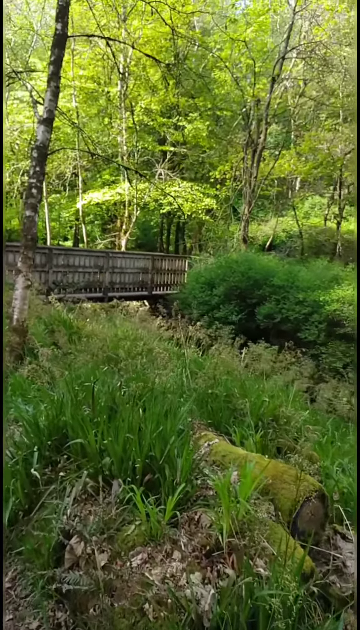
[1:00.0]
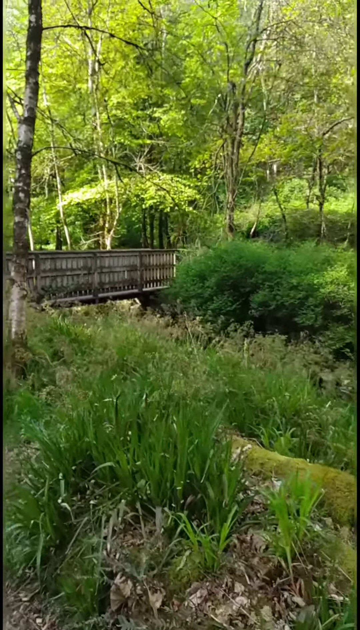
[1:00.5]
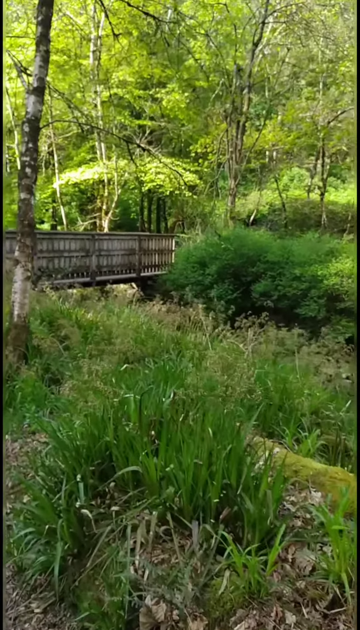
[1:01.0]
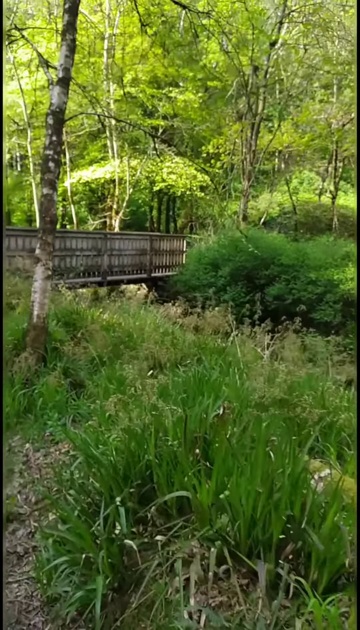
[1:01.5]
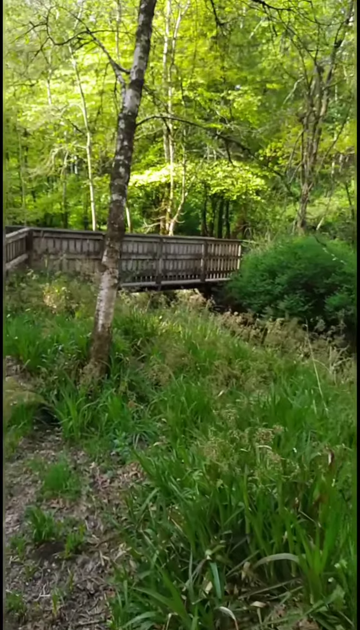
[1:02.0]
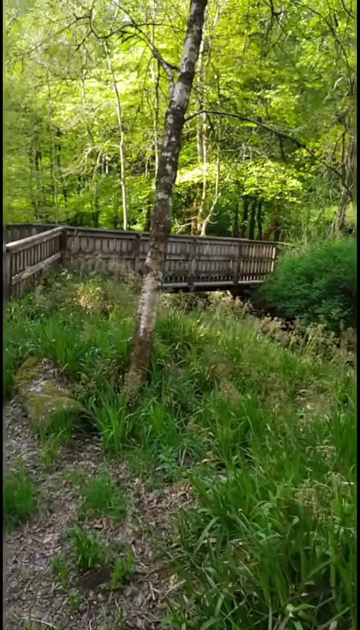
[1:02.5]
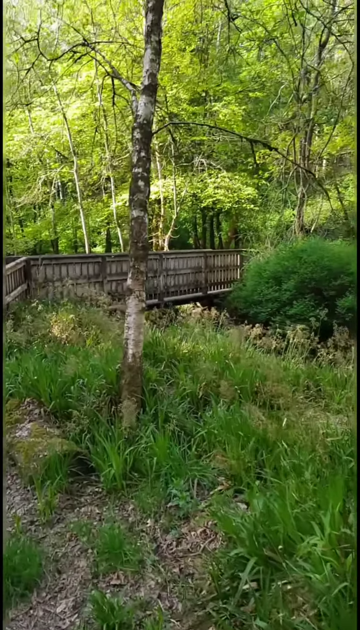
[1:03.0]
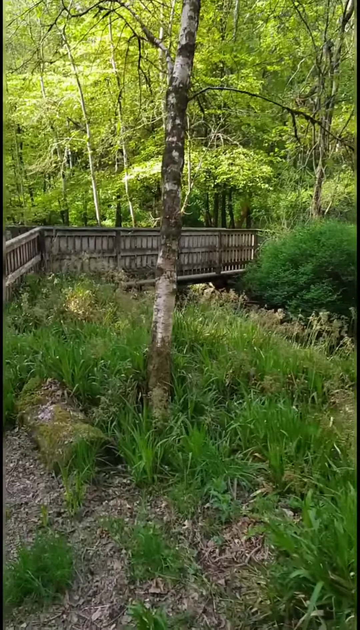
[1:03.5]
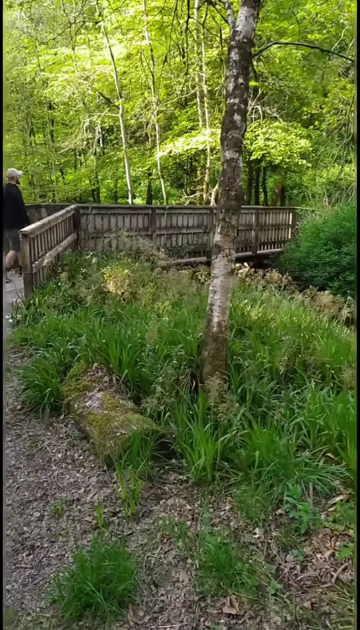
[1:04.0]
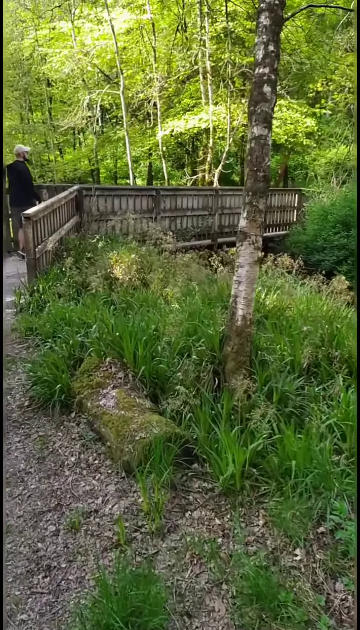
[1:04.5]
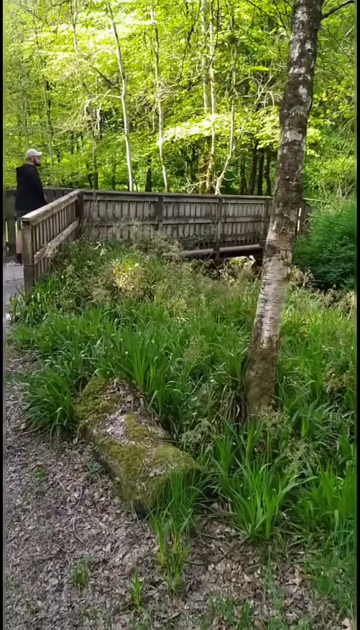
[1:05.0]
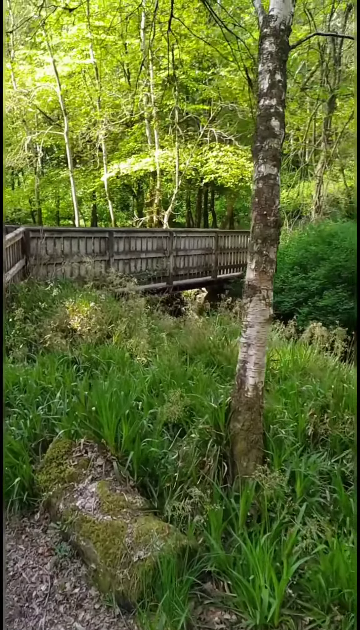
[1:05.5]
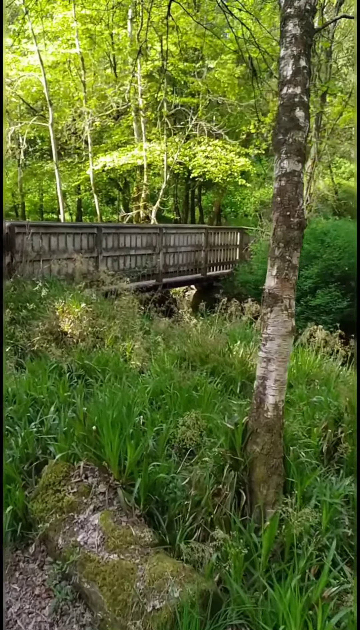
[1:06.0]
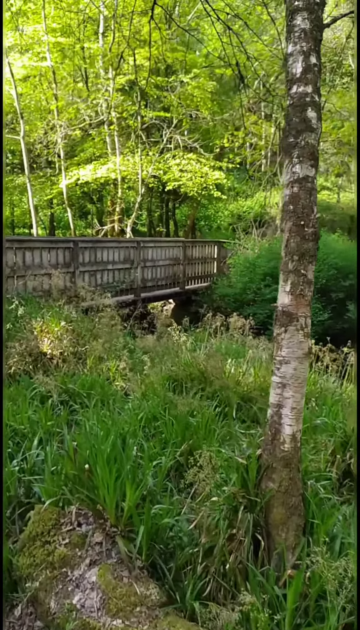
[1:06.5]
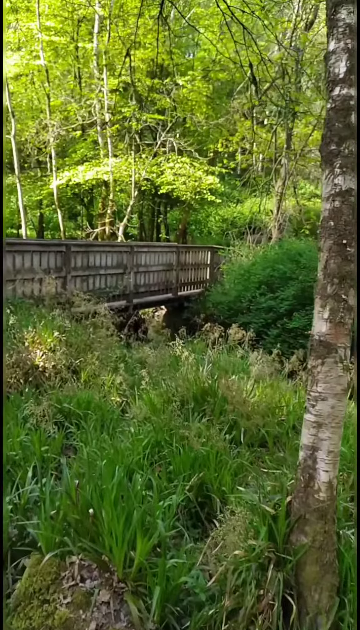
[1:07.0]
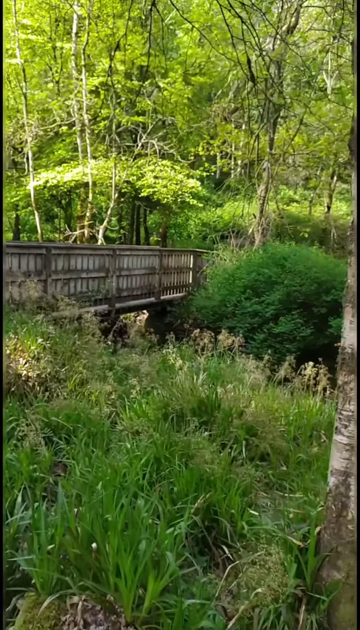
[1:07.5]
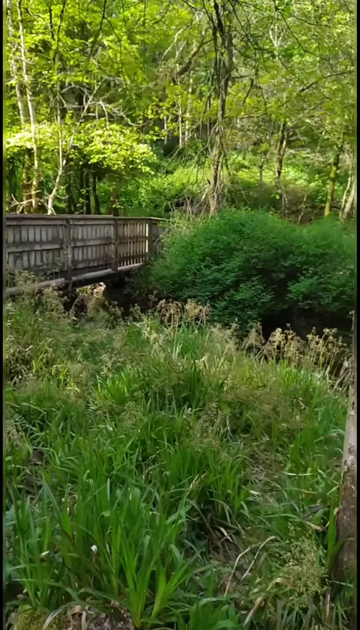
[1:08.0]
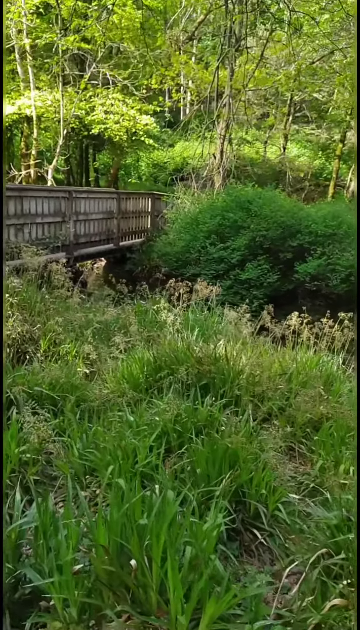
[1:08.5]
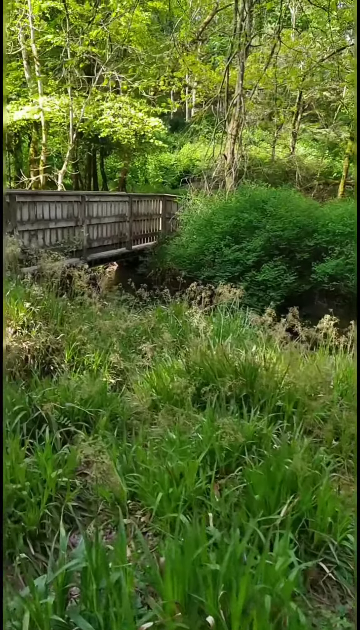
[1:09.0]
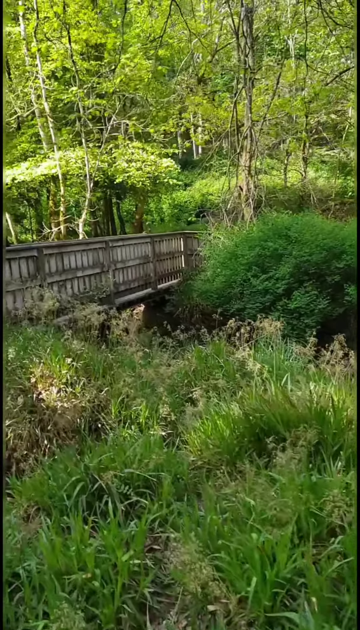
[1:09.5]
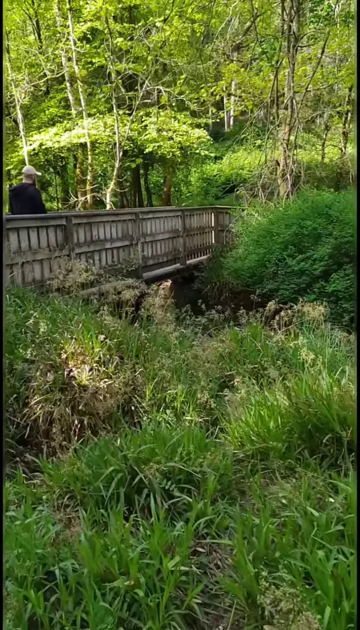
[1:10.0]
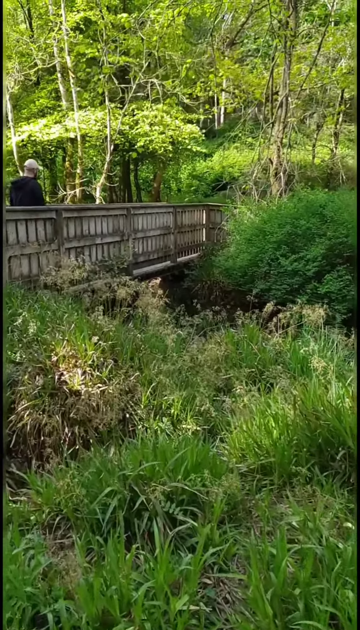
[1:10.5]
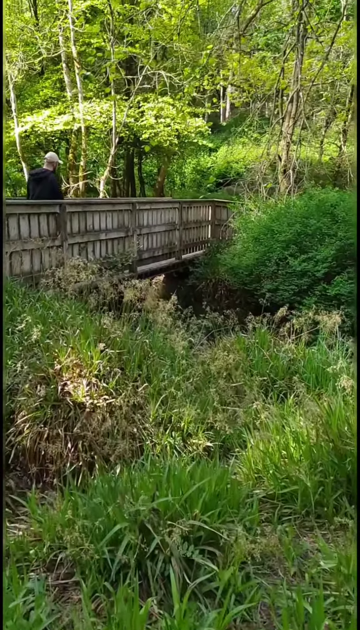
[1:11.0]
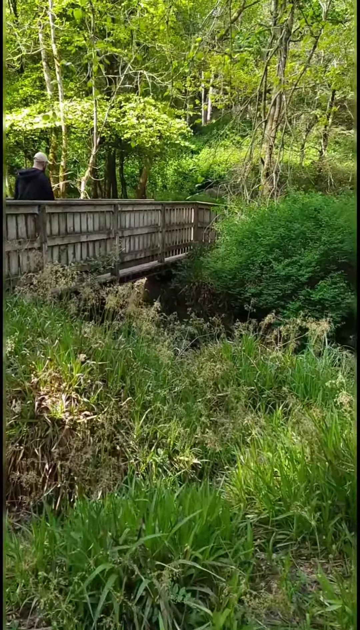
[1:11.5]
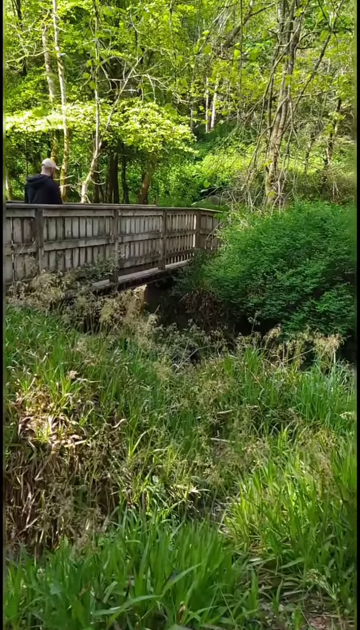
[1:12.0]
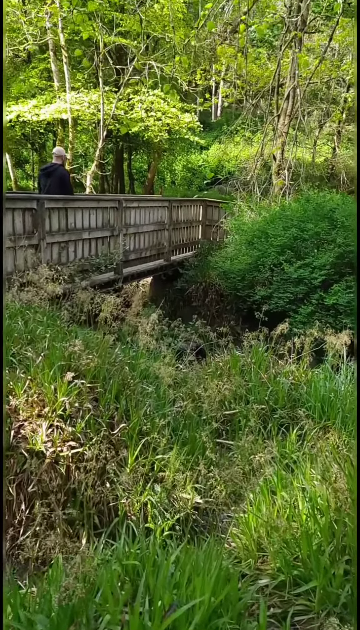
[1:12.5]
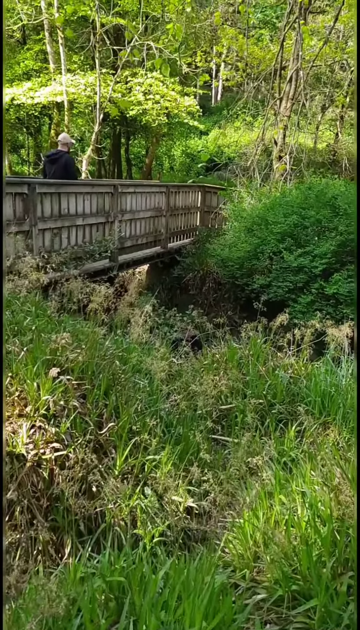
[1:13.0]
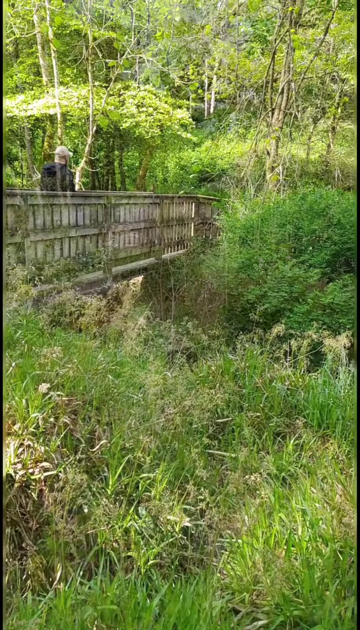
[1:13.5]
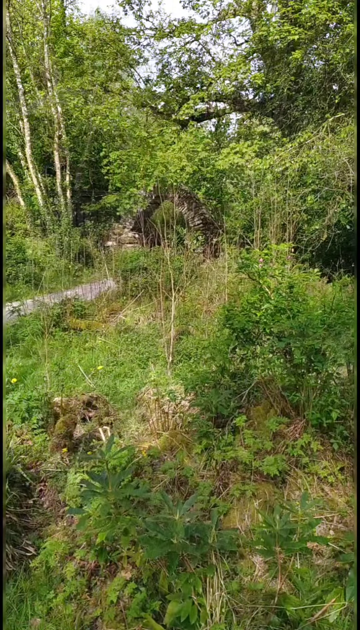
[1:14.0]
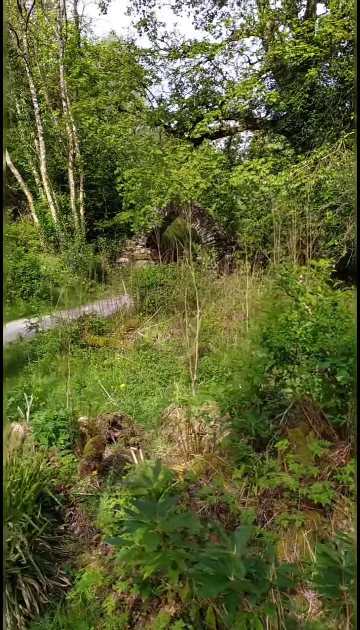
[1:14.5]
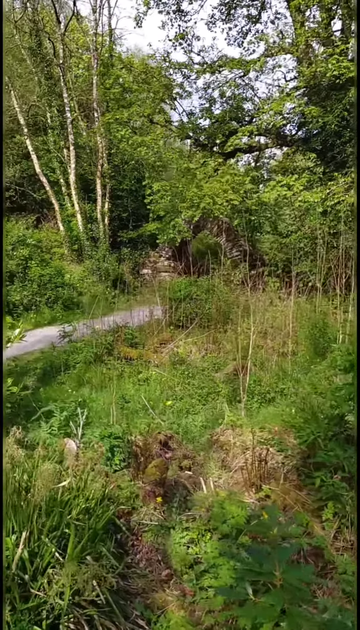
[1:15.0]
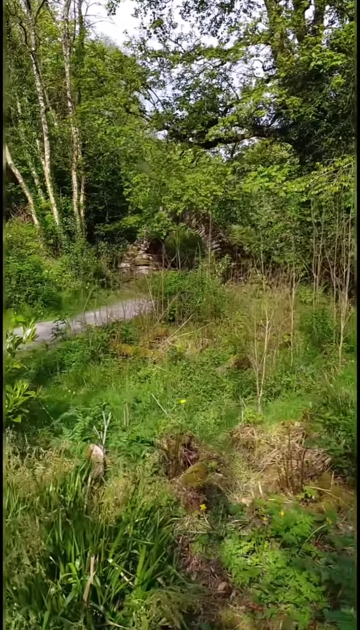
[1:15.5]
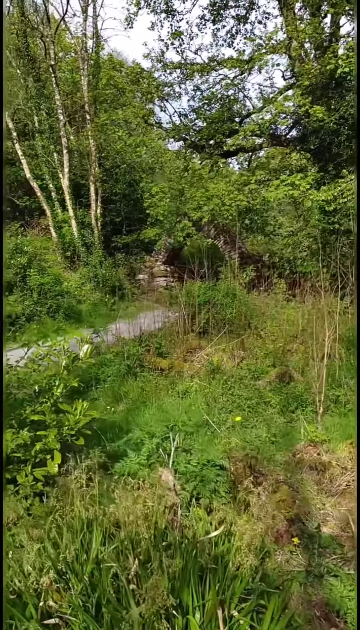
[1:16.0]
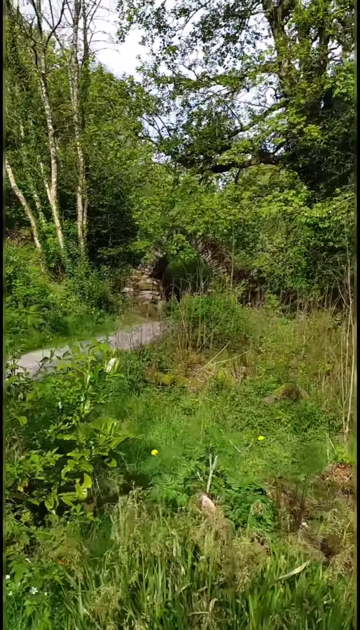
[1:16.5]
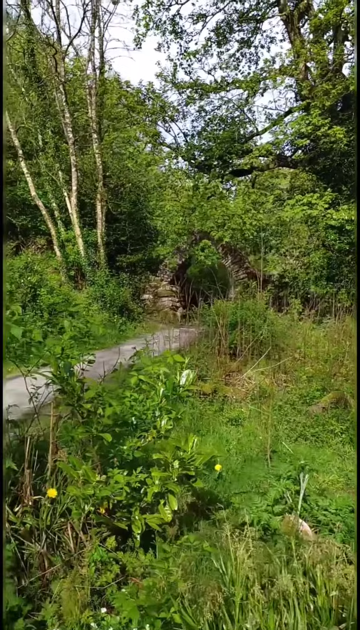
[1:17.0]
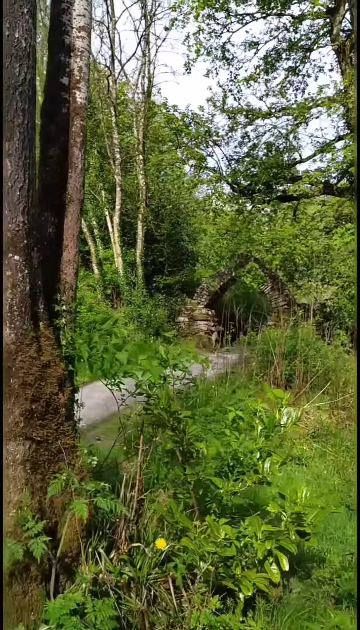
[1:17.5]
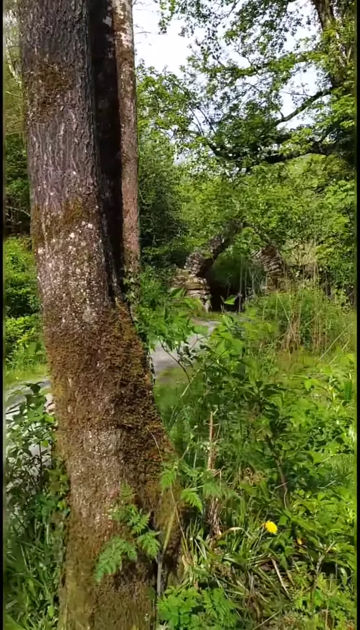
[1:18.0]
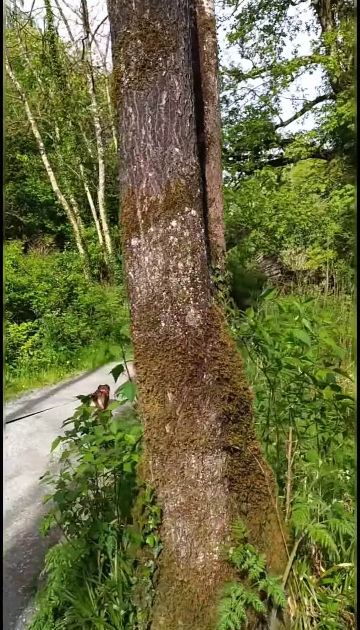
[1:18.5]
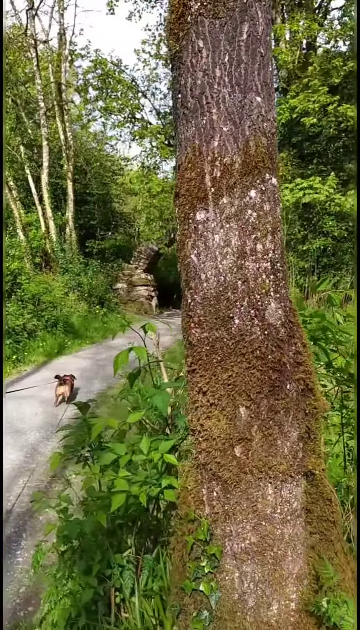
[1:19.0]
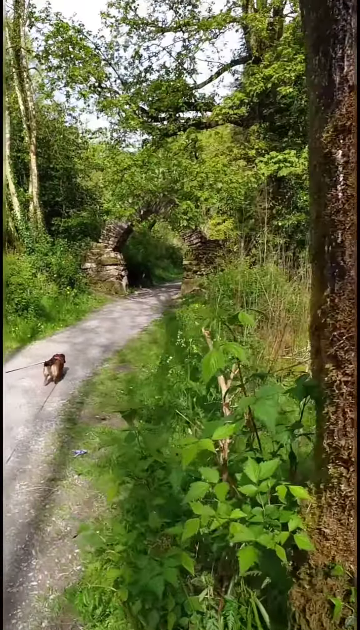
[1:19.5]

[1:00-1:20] The person walks along the trail with the camera pointed toward the bridge, then pans slightly to the left, showing a person walking along the bridge in the other direction. The person filming appears to walk forward up to where the bank of the creek would be, but a flash transition then shows what appears to be another location: an area with a lot of tall grass, where they walk along a paved road. The road appears to bend and continues onward ahead, toward what appears to be an archway overgrown with trees and moss; the archway appears to be made of brick. A tree obscures the archway for a moment as they pass in front of it, and they go around the bend, continuing along the path toward the archway. A small, indistinct animal stands in the path ahead of them.